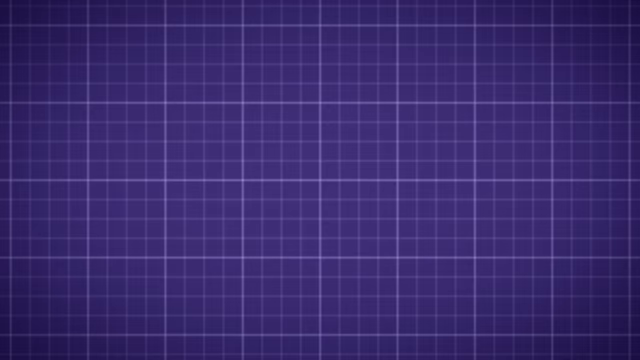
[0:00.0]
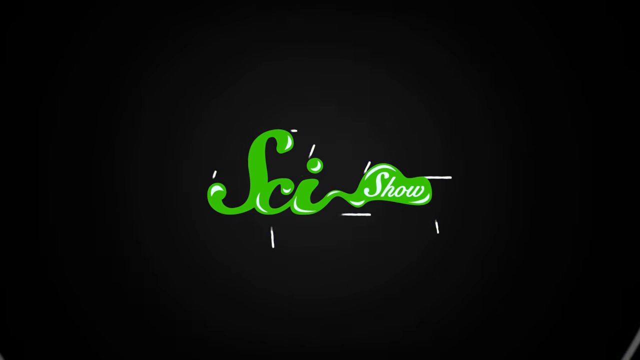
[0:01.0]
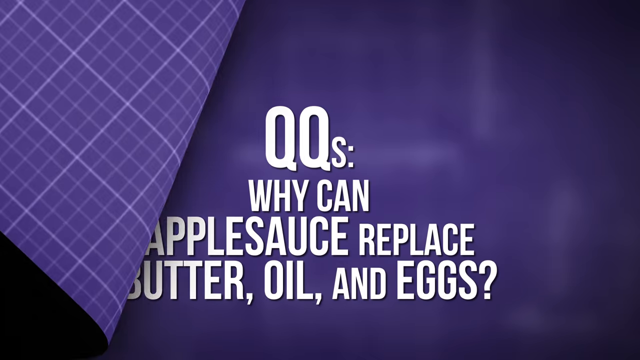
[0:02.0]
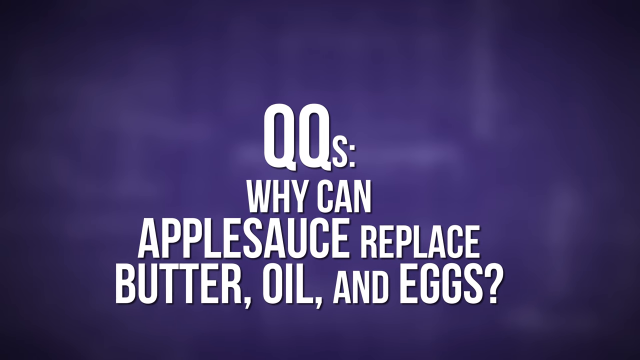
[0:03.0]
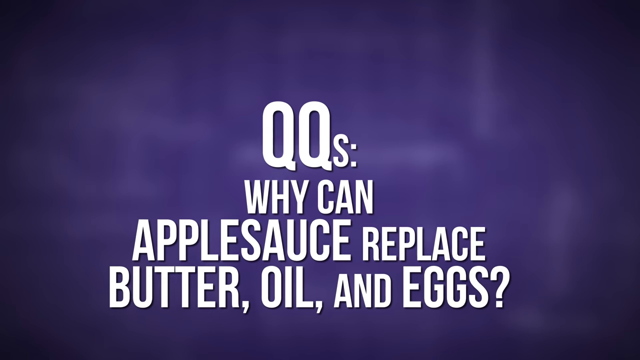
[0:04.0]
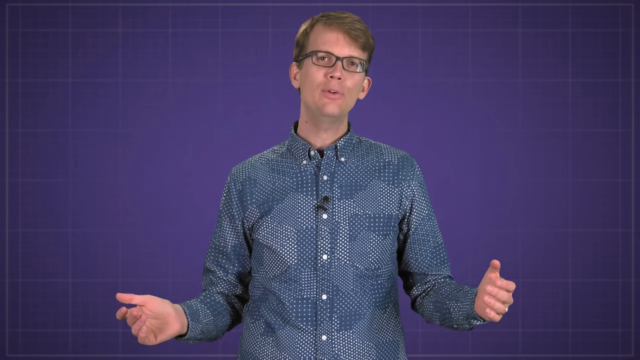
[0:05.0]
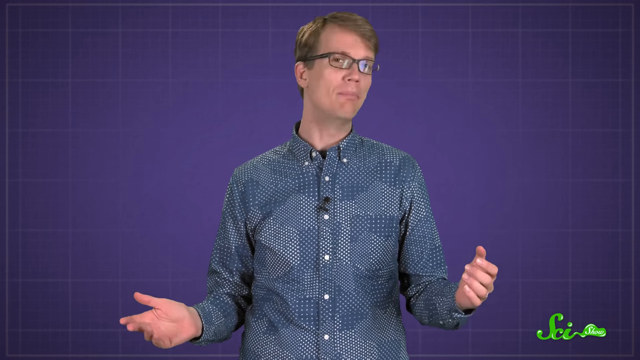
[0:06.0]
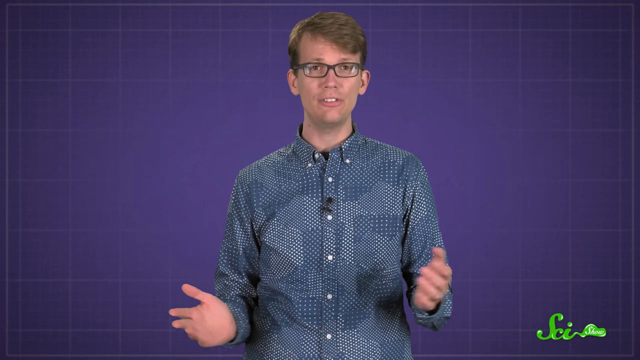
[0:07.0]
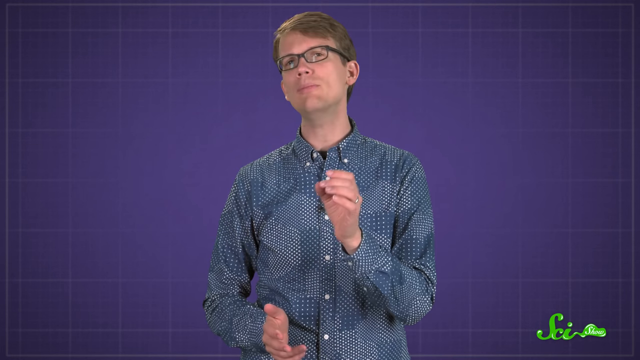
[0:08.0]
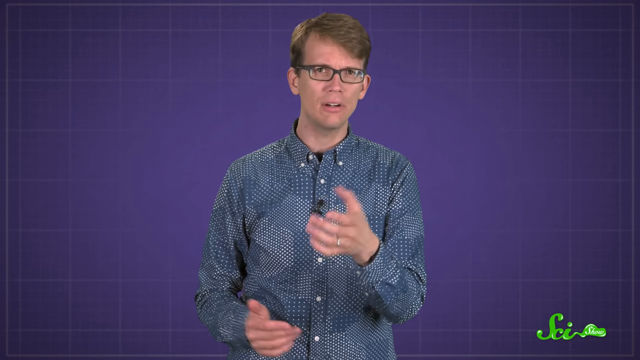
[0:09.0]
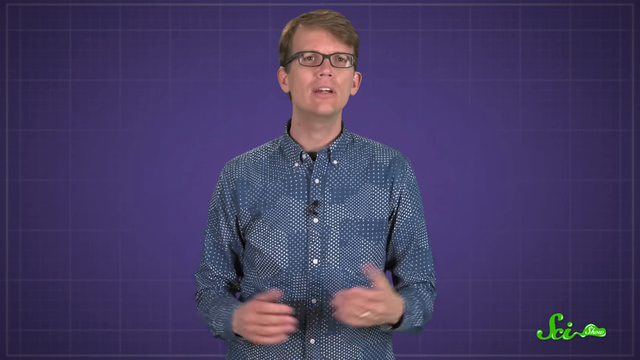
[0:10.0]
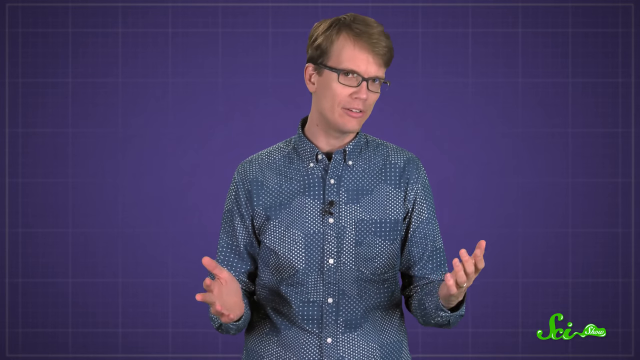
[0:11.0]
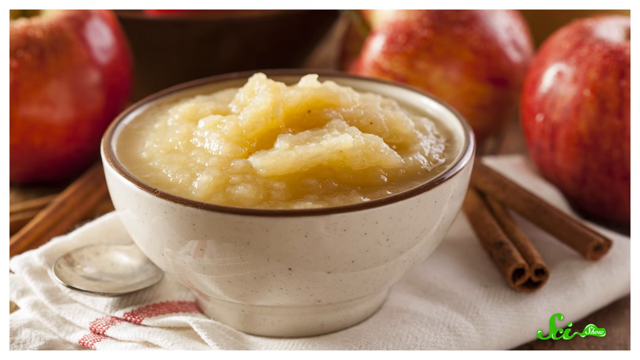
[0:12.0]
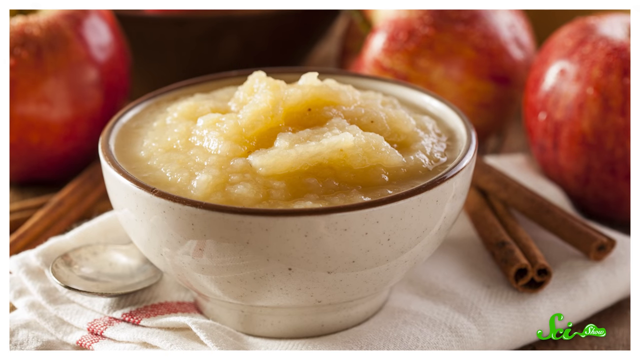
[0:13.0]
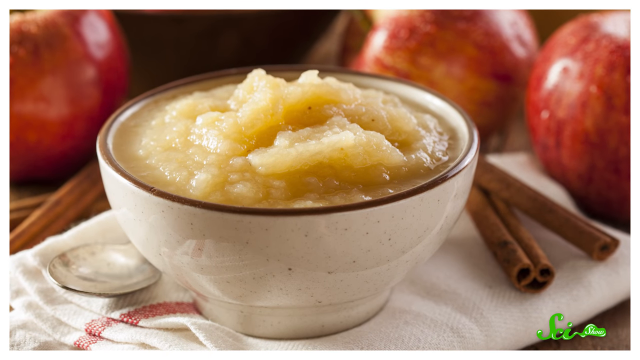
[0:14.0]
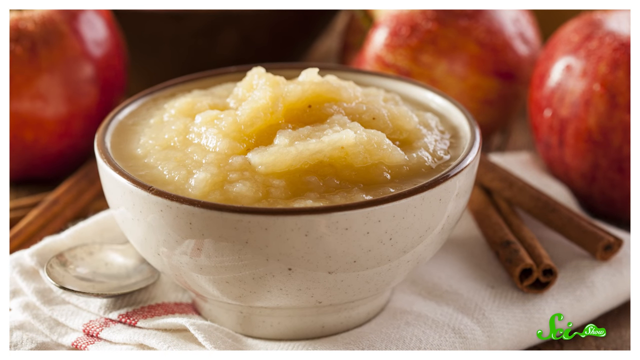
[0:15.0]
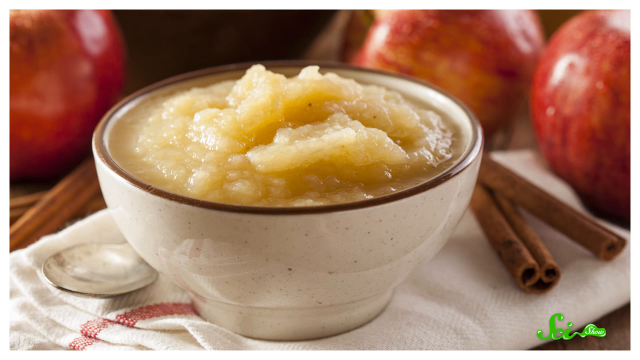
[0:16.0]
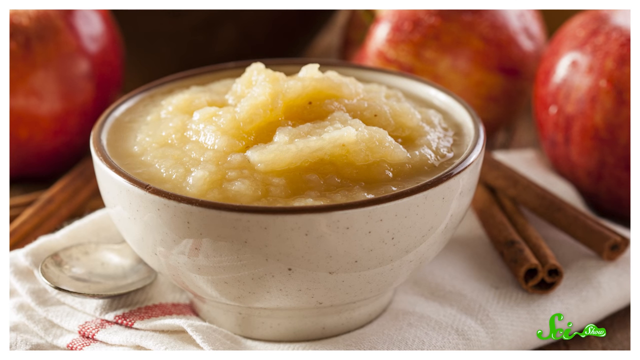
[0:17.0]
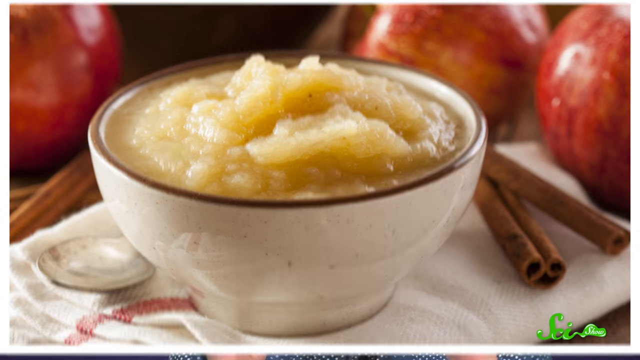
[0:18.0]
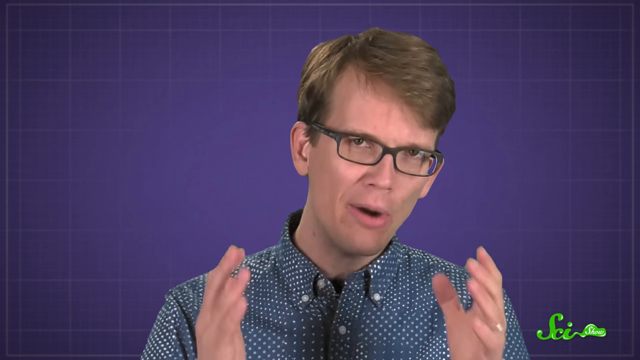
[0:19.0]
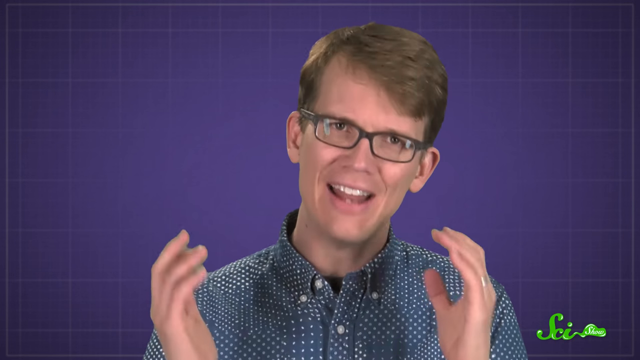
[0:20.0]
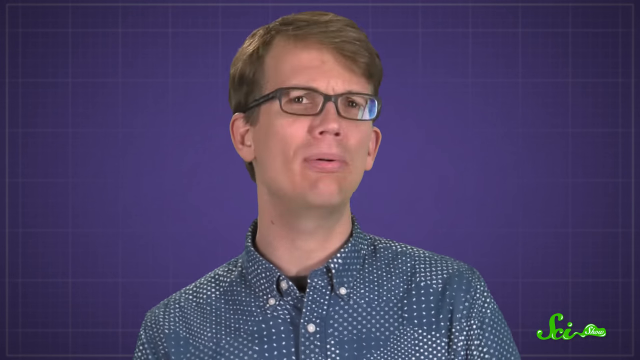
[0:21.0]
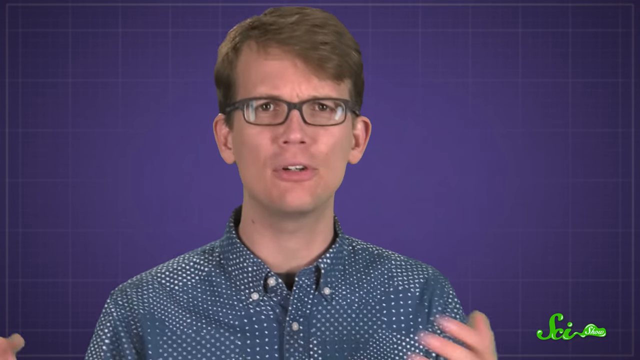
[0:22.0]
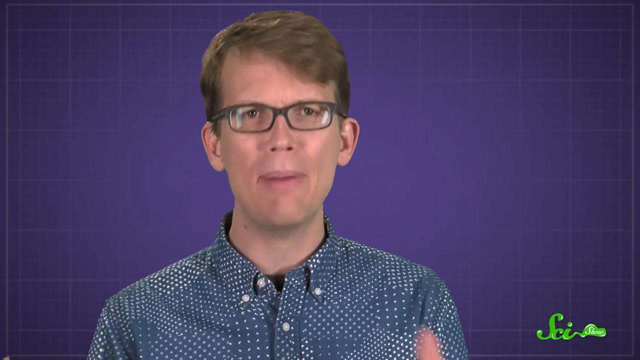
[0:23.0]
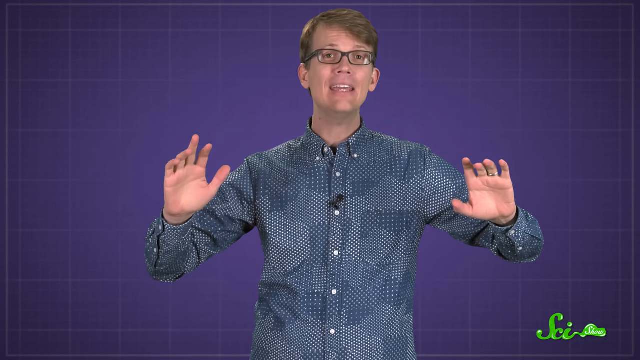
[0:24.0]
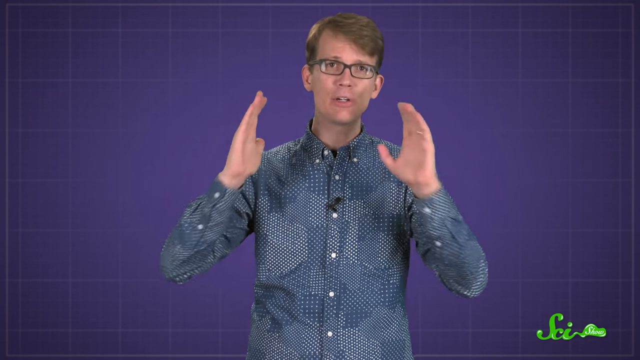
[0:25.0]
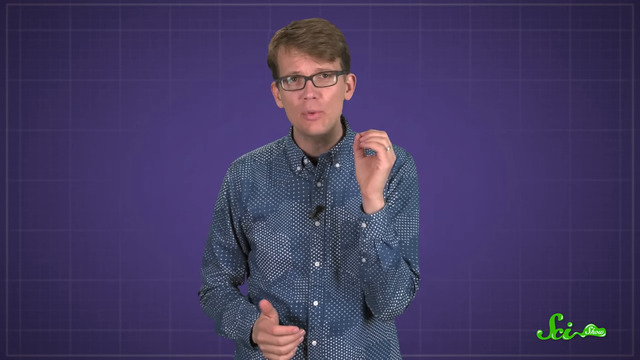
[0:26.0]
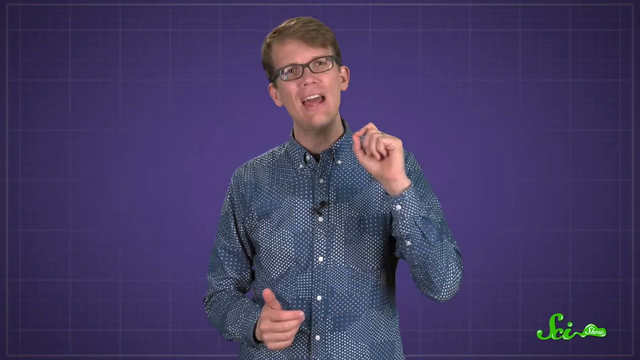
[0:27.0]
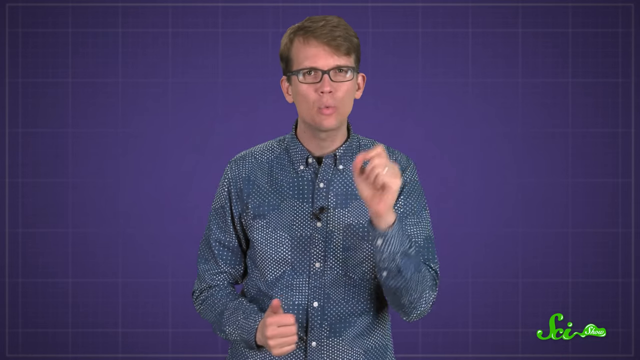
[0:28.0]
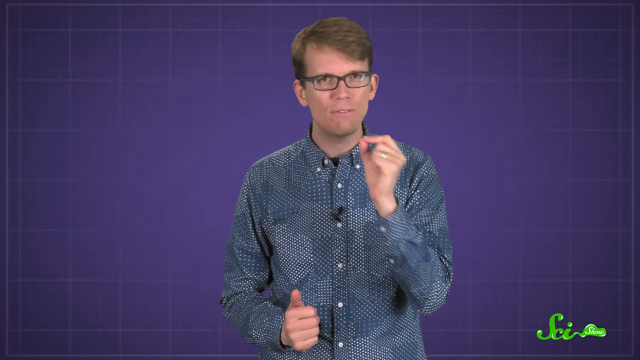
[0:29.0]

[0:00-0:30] A science video titled SciShow has a black background with green writing, and text asks "why can applesauce replace butter, oil, and eggs?" At the very beginning, some text appears briefly before the science title, too quickly to read, including something with "2000". A white man in a blue, intricately patterned button-down shirt talks while gesturing with his hands. He has rectangular framed glasses and blonde hair cut kind of short at the sides. Stock footage shows a bowl of applesauce with some cinnamon and some apples, and then the man is back, still talking with his hands.